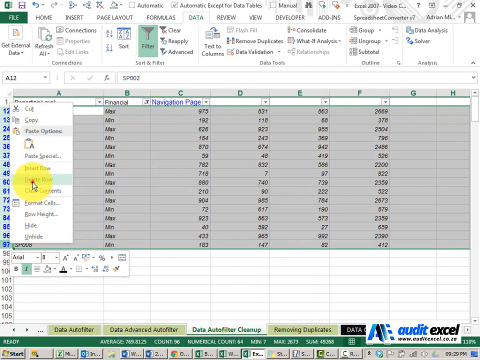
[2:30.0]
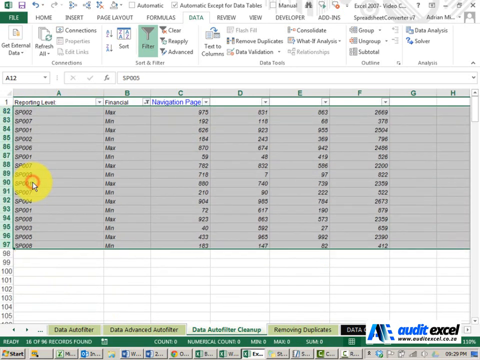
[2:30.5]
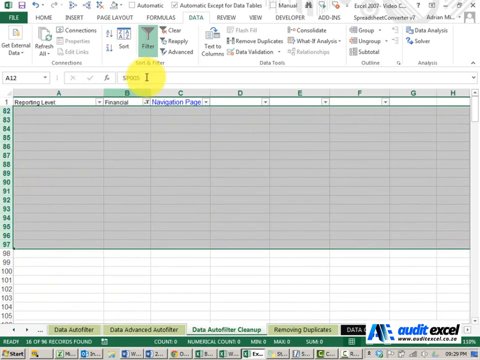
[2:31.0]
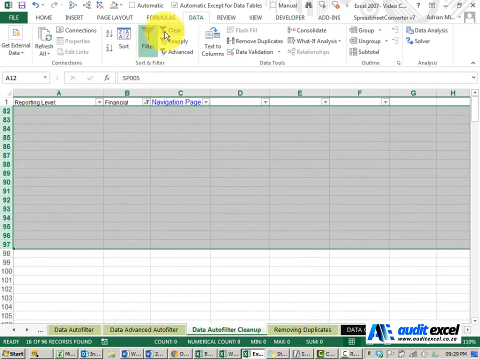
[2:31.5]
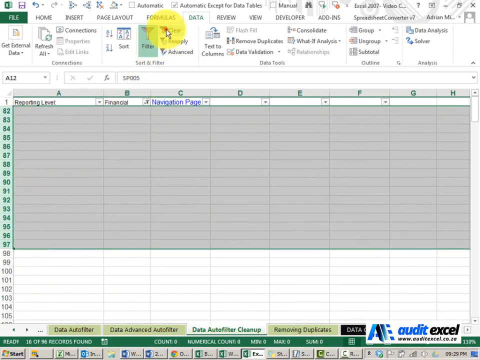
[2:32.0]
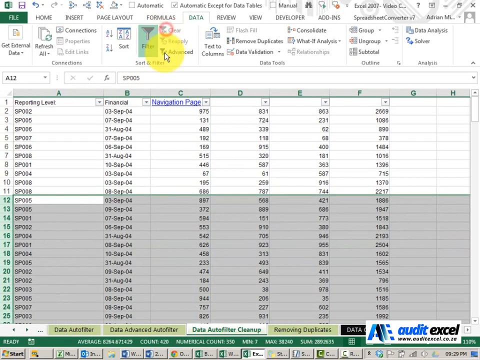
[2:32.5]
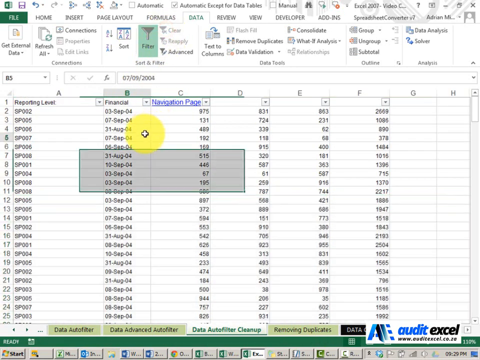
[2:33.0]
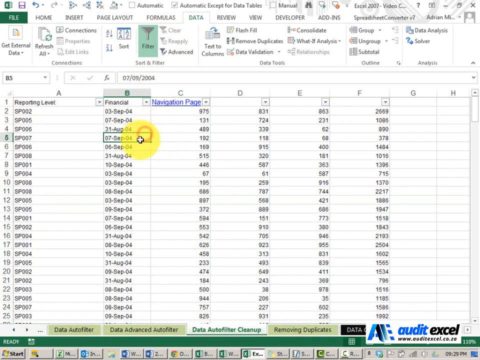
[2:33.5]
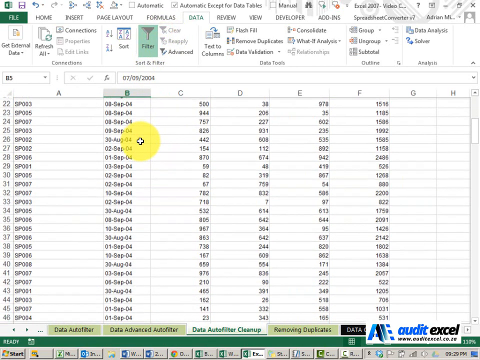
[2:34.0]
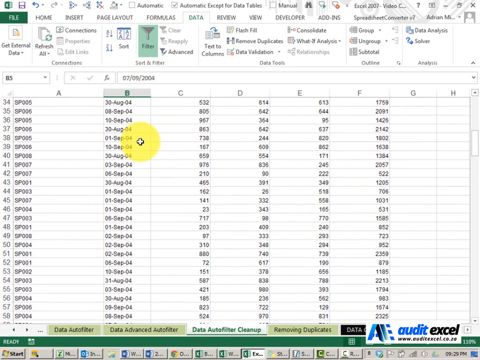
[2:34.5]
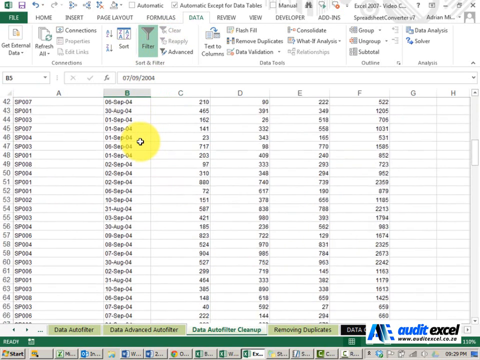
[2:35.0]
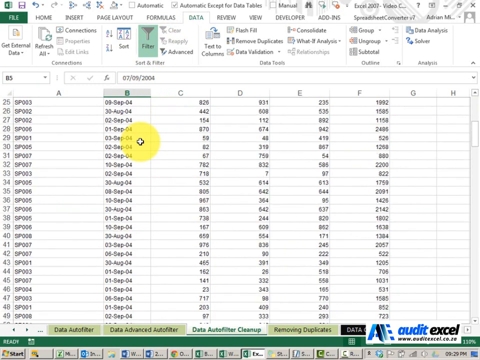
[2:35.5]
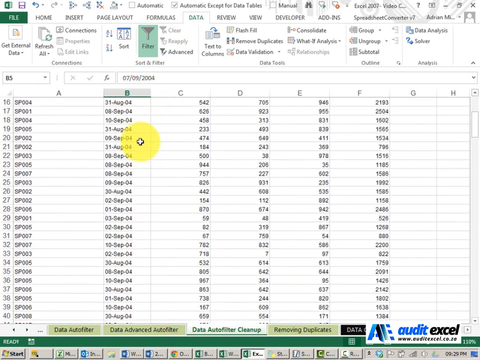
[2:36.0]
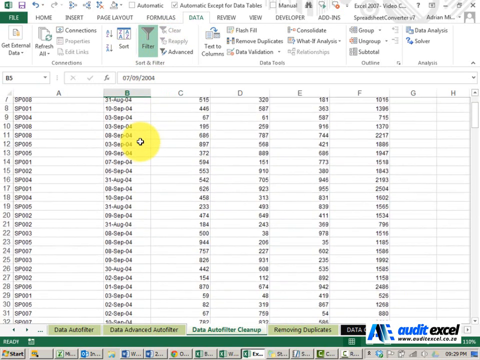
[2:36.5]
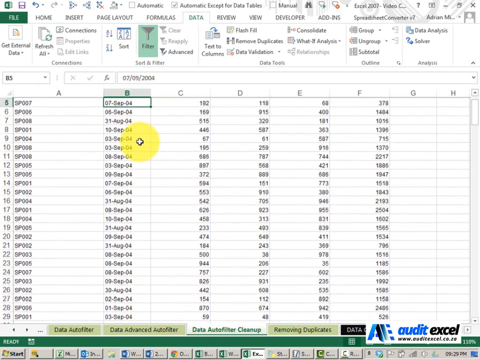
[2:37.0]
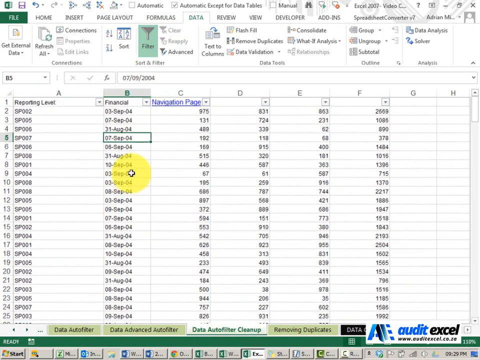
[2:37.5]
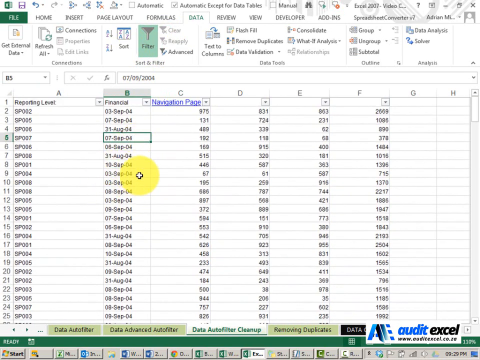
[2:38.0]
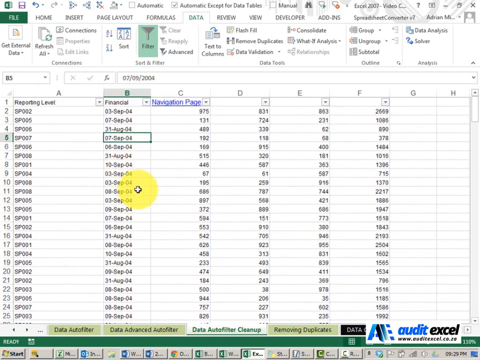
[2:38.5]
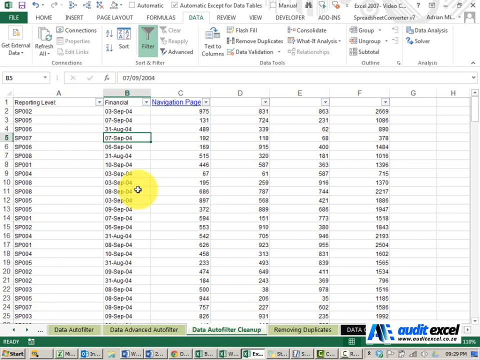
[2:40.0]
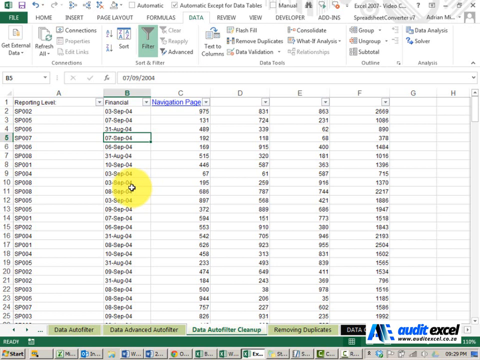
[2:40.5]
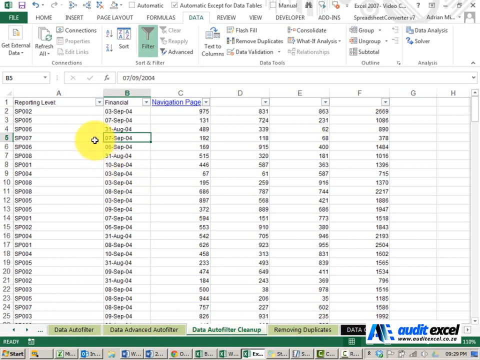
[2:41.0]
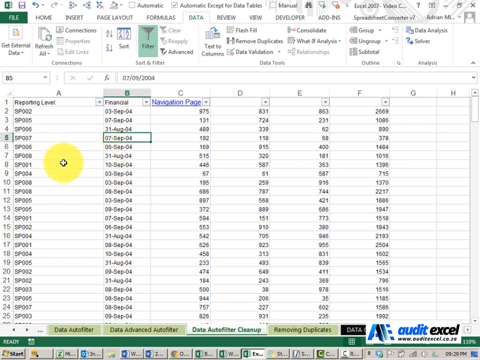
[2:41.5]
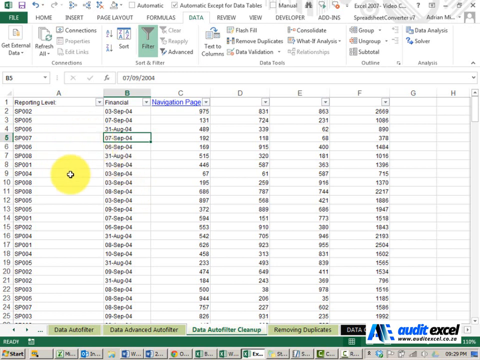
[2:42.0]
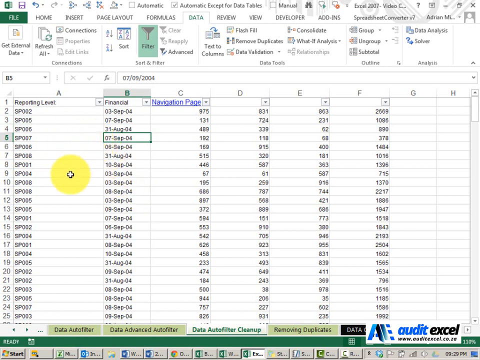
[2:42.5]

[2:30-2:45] After the deletion, the data is cleared and filtered, and the period of sales for each employee is shown. A row is deleted and clear is selected, which brings in all of the sales for each employee. The spreadsheet apparently serves to audit all the salespeople for a specific period, seemingly to verify that the sales entered match another financial system.